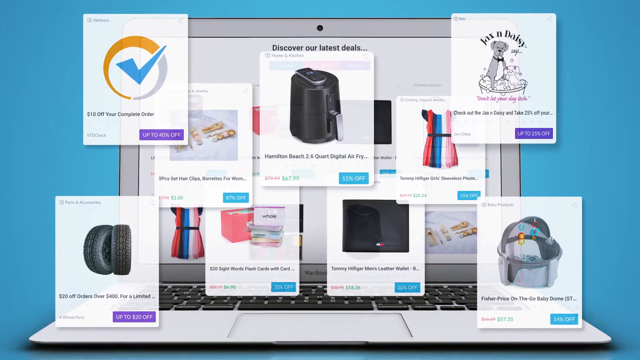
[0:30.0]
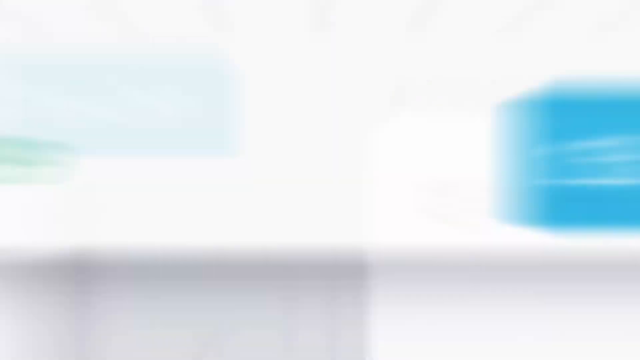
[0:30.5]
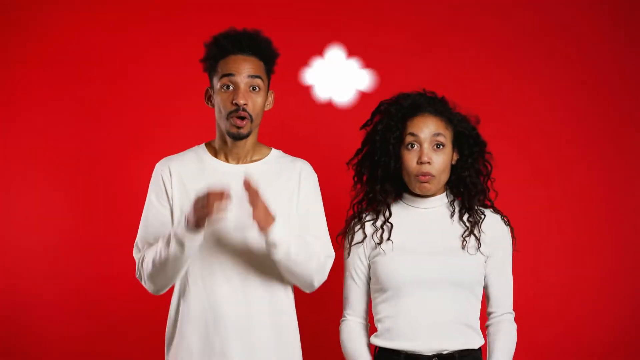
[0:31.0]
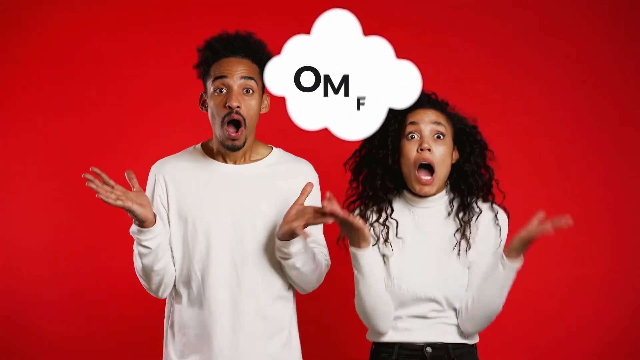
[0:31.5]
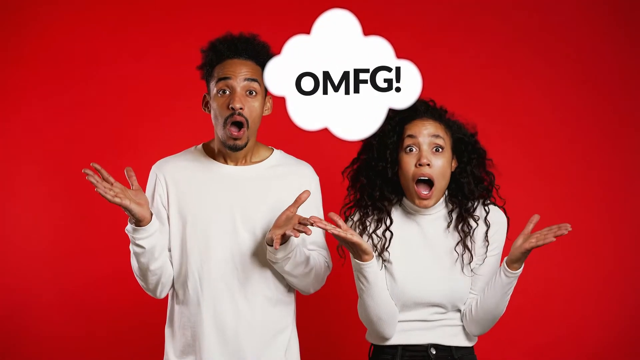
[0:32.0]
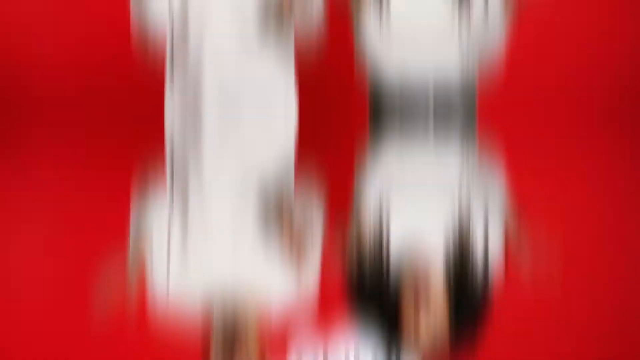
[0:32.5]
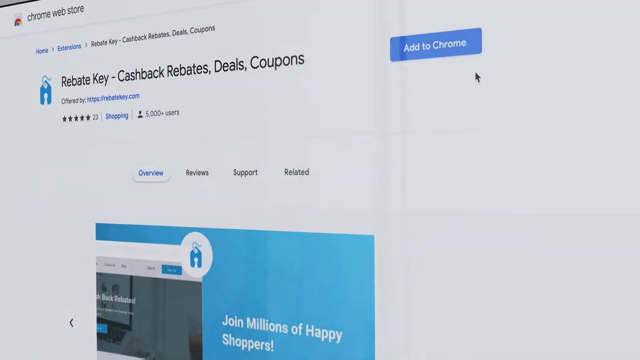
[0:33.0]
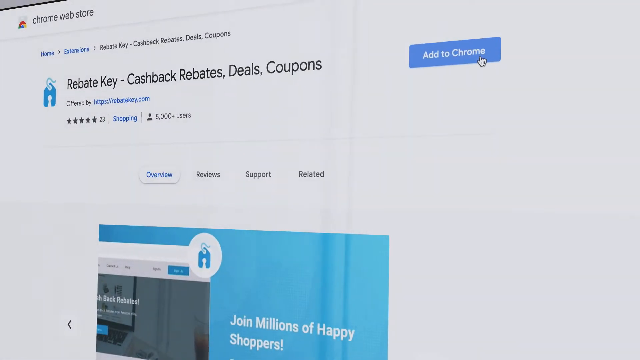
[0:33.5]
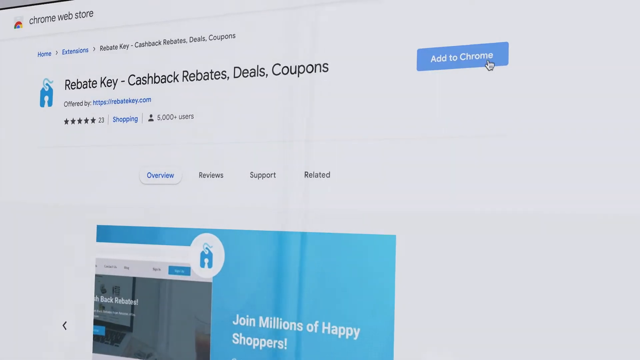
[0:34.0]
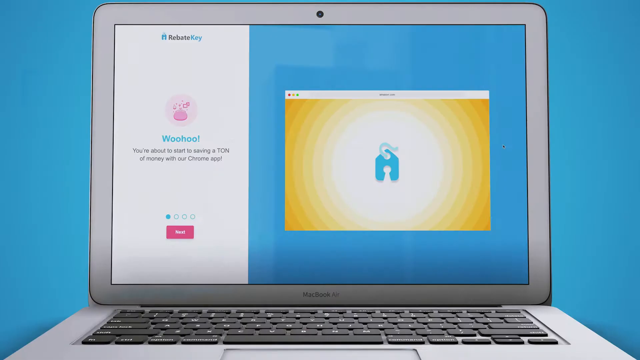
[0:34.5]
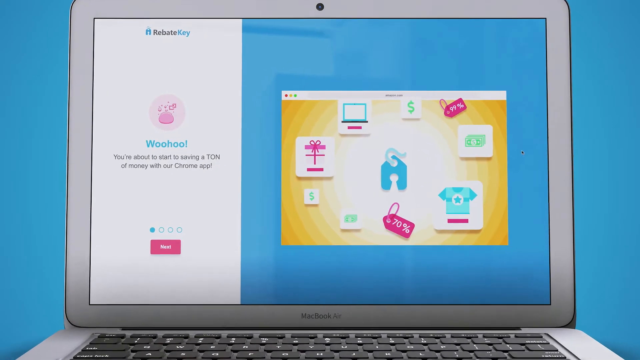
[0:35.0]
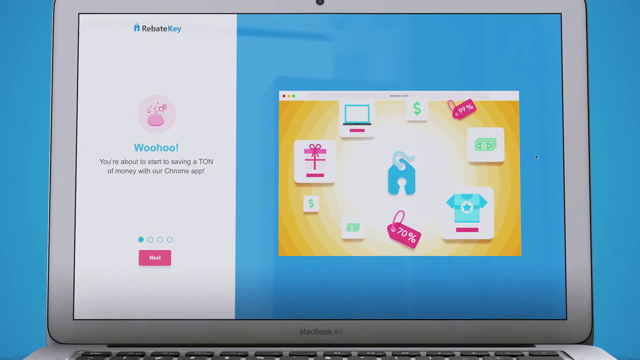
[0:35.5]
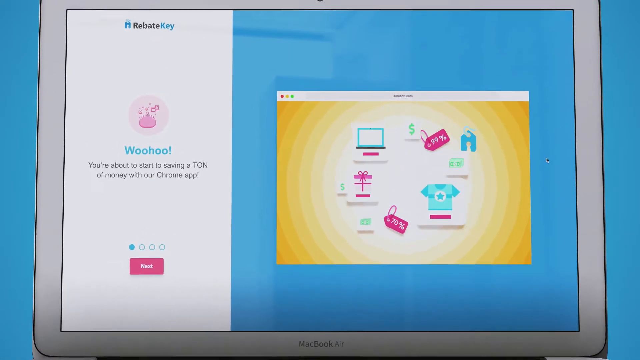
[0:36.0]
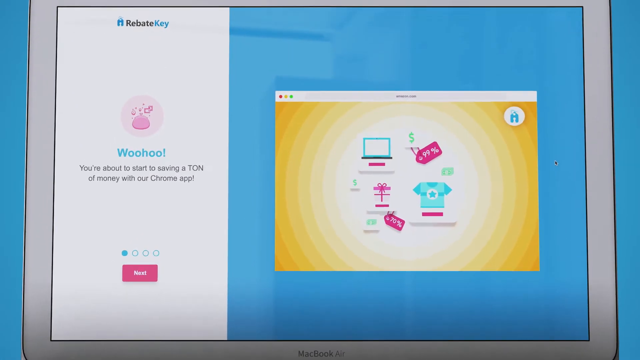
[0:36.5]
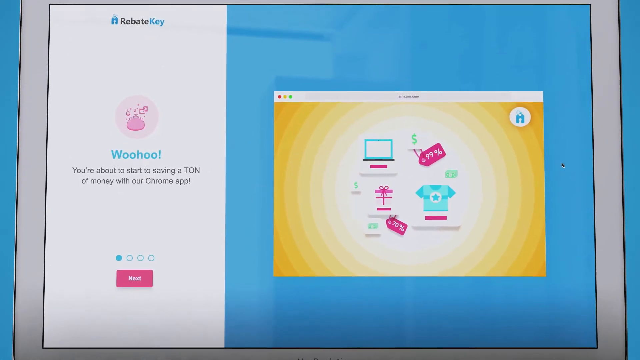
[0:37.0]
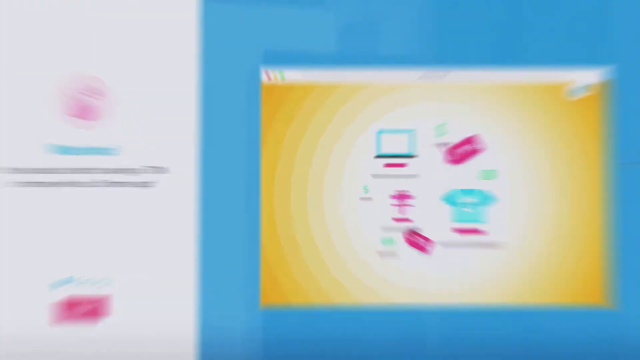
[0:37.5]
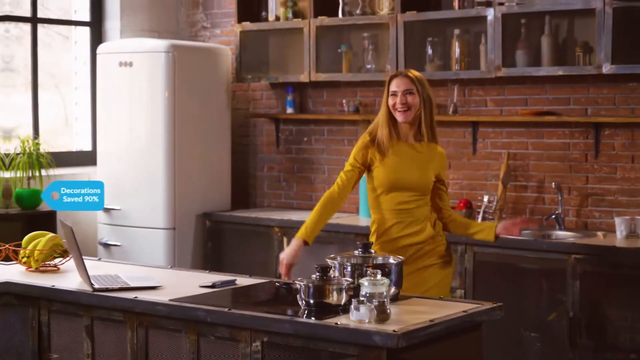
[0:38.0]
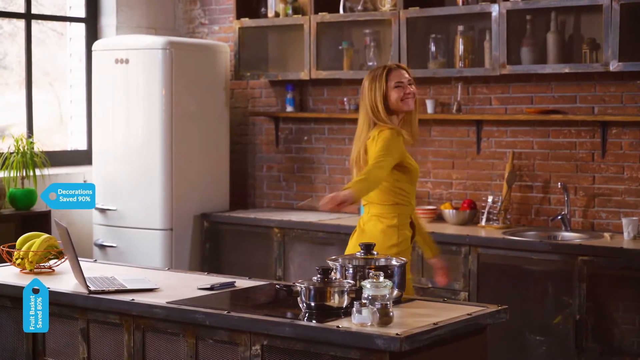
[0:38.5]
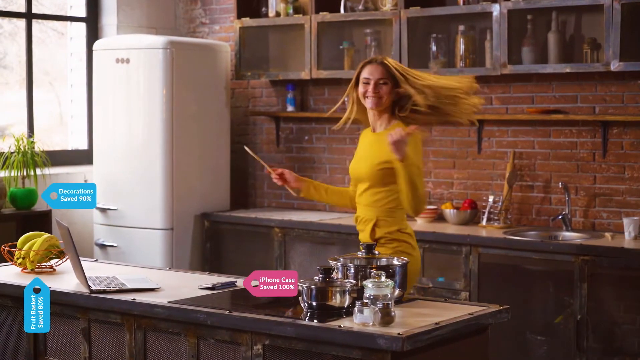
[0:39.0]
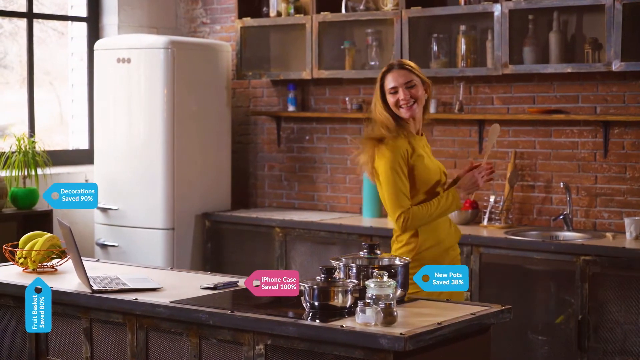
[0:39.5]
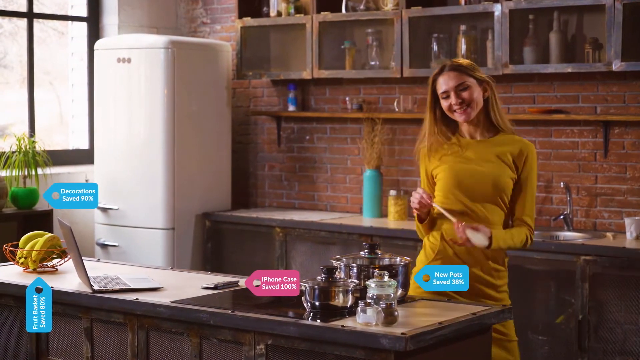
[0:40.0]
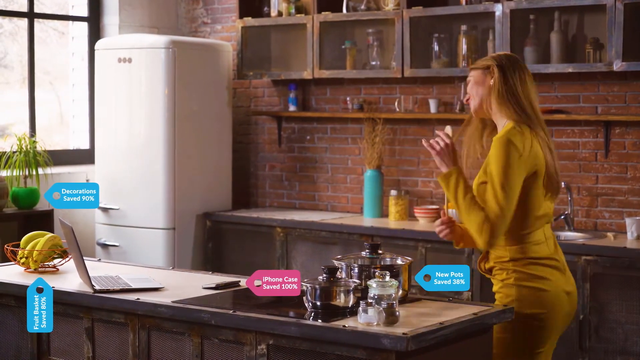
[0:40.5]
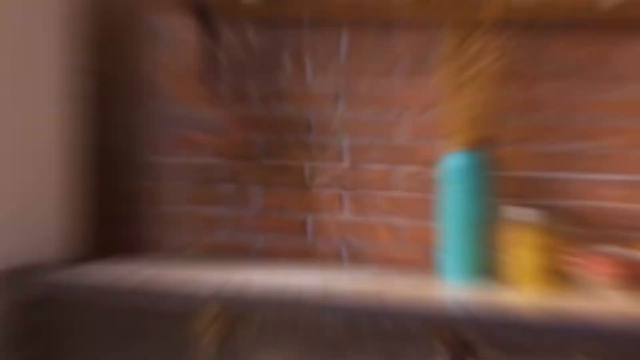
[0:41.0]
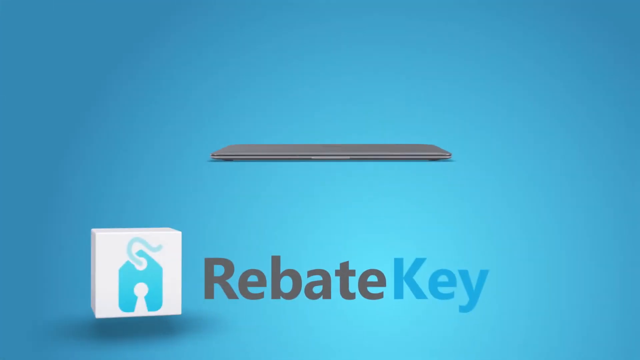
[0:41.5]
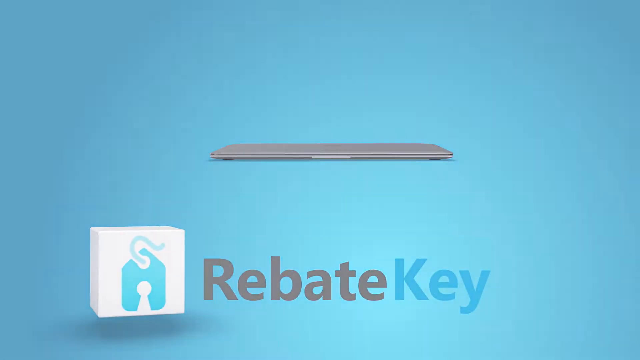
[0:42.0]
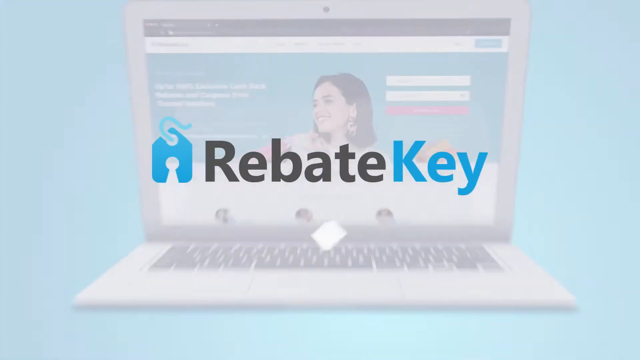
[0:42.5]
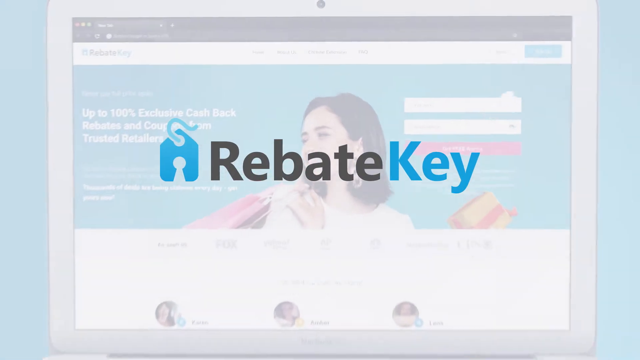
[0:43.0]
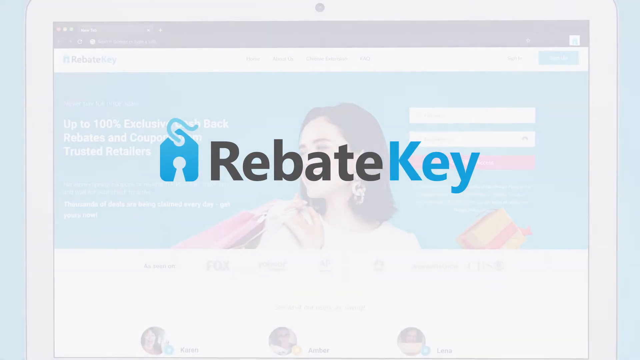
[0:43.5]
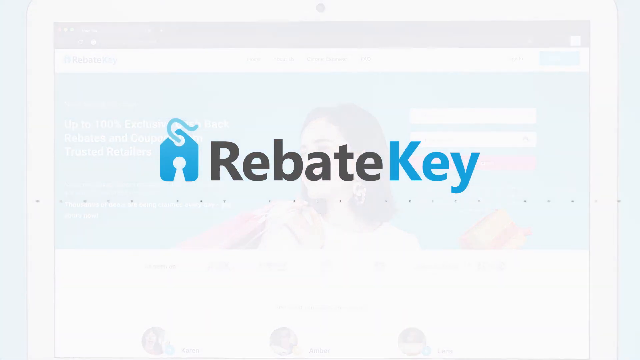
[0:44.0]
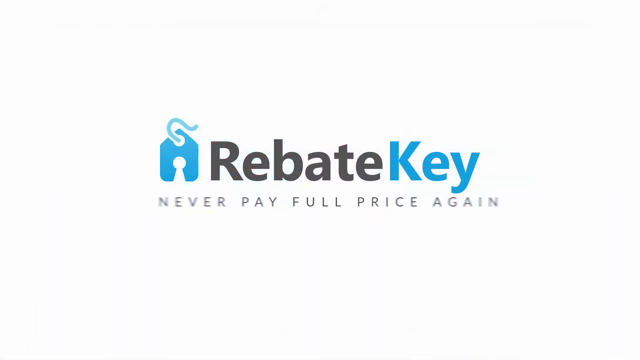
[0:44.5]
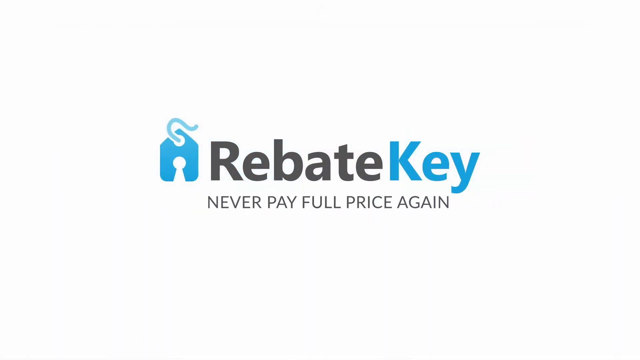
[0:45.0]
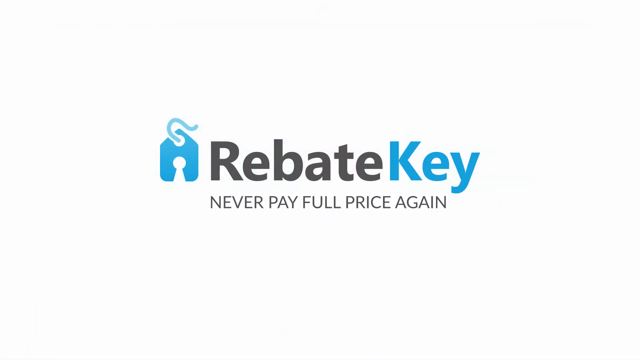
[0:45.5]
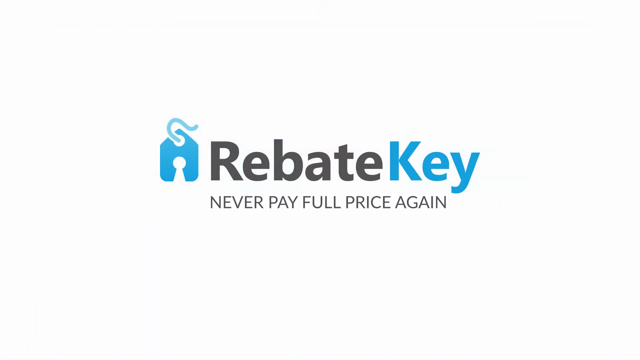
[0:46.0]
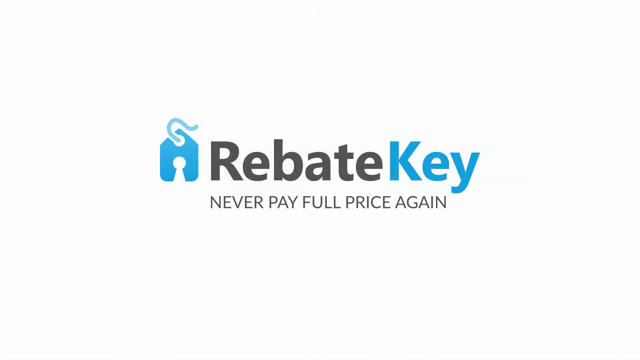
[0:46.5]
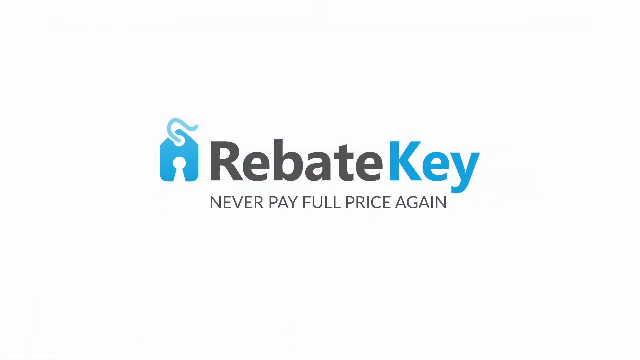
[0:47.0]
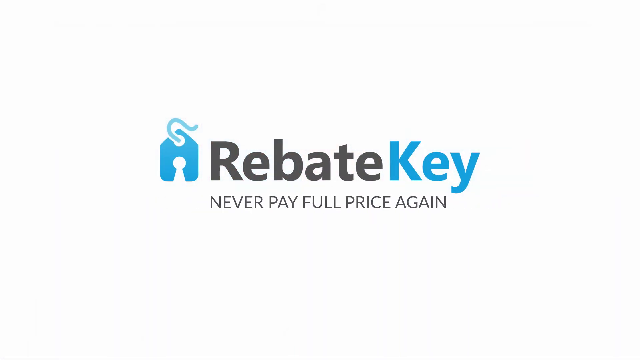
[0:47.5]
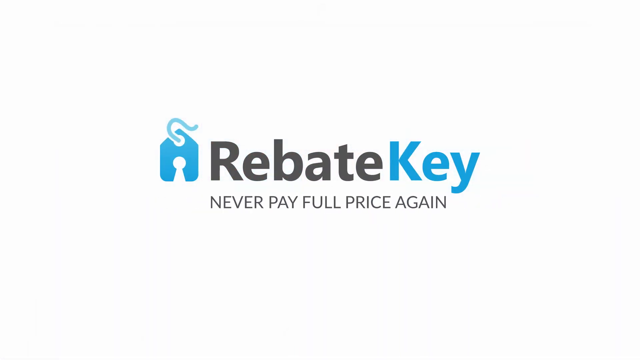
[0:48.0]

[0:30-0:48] The ad for RebateKey shows different companies offering rebates, then all kinds of products, such as a coffee maker, a dress, an unidentified item, tires and a lunch box. Two people appear with the text "OMFG." RebateKey is then shown as a download on the Chrome Web Store, with text reading "cash back rebates, deals, and coupons" and an "Add to Chrome" button to click. RebateKey appears with text on the left reading "Woohoo, you're about to start saving a ton of money with our Chrome app," followed by a Next button, while things swirl around. Finally, a woman dances in her kitchen, apparently because she got a rebate.